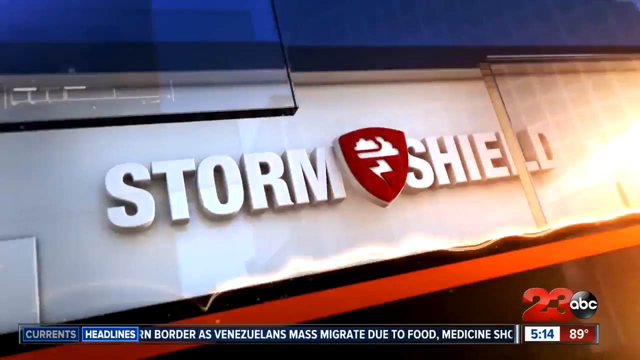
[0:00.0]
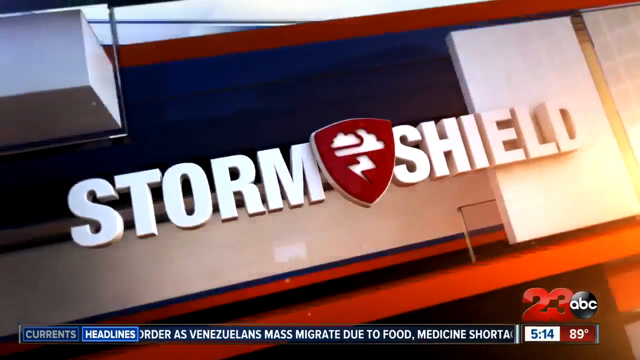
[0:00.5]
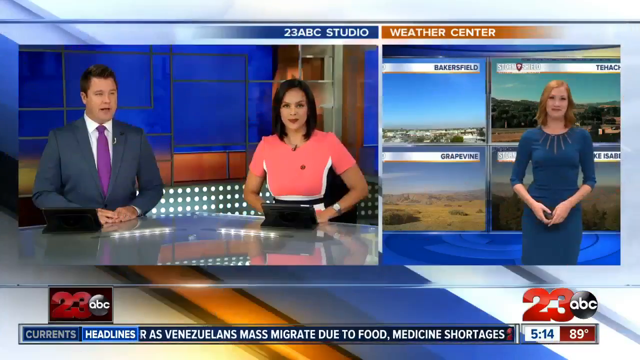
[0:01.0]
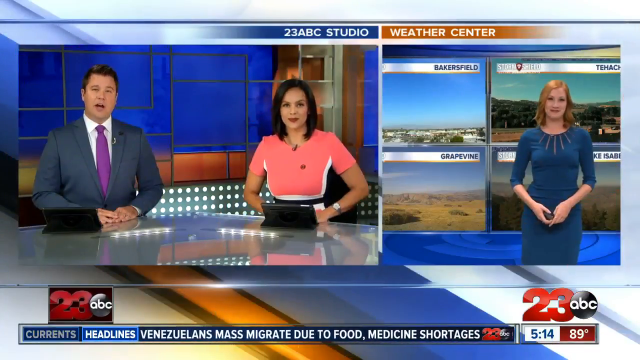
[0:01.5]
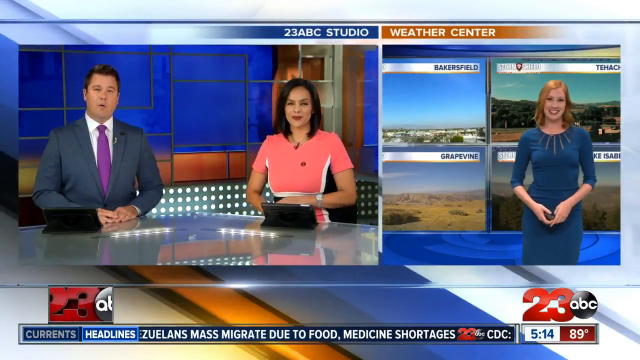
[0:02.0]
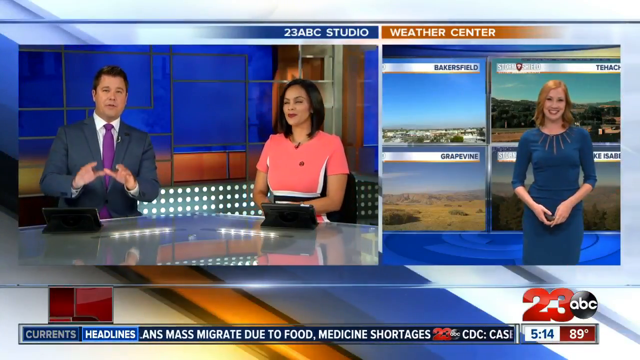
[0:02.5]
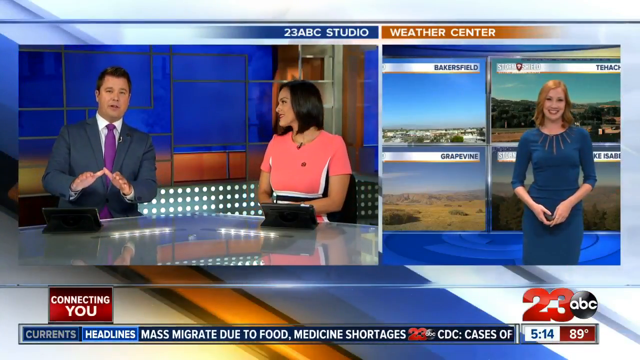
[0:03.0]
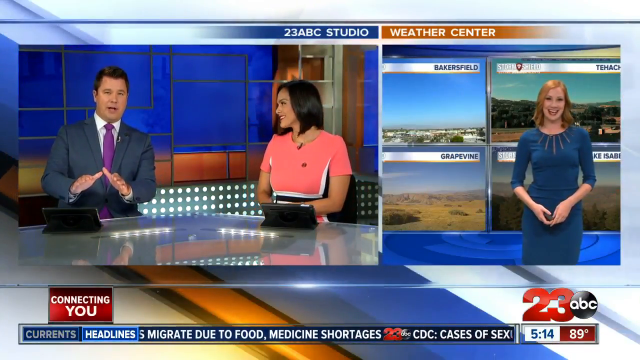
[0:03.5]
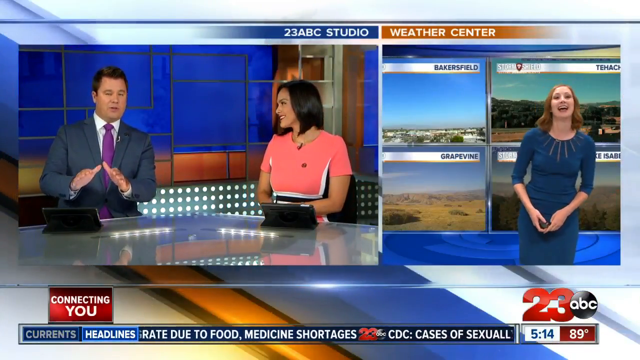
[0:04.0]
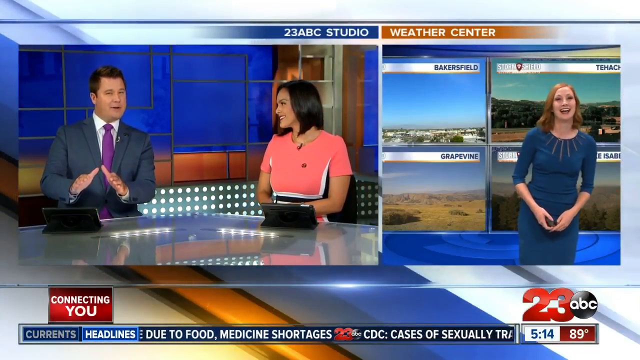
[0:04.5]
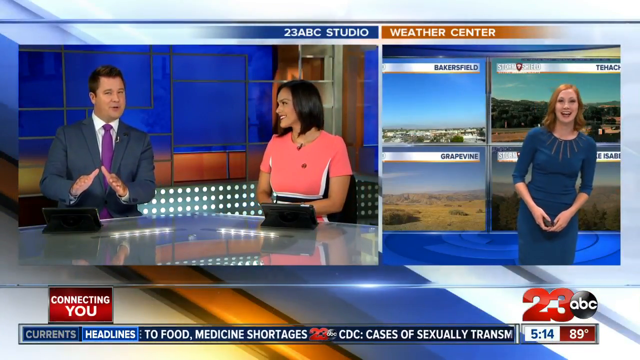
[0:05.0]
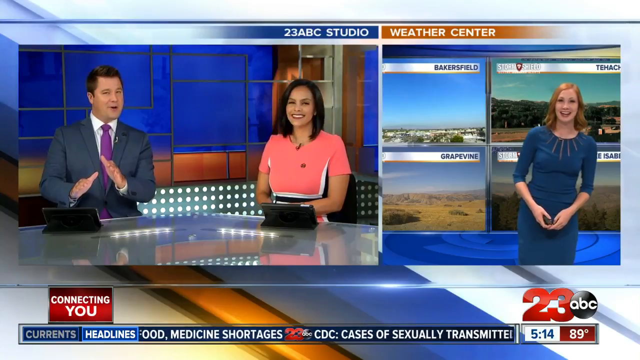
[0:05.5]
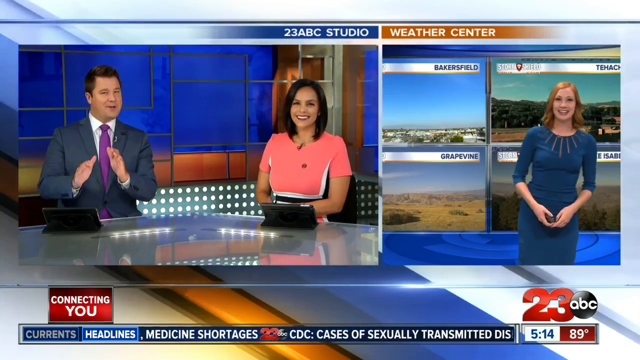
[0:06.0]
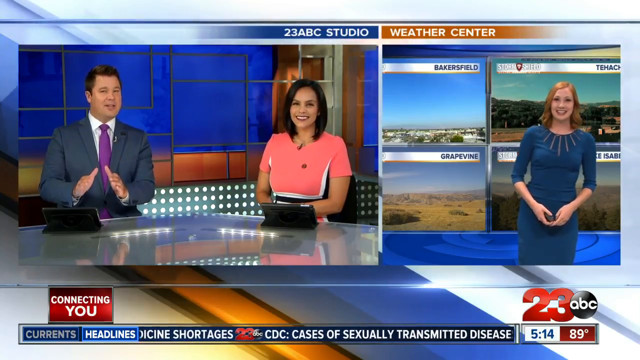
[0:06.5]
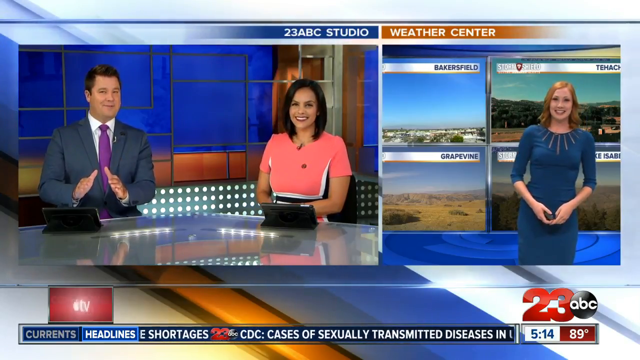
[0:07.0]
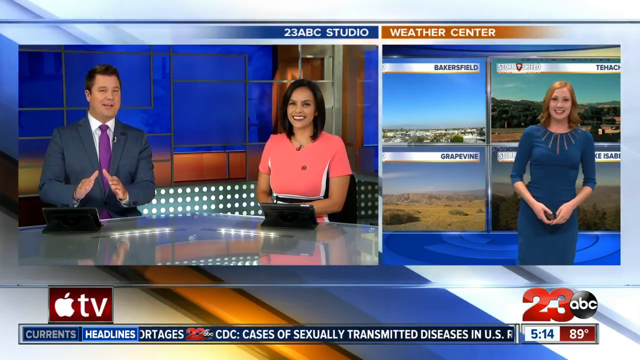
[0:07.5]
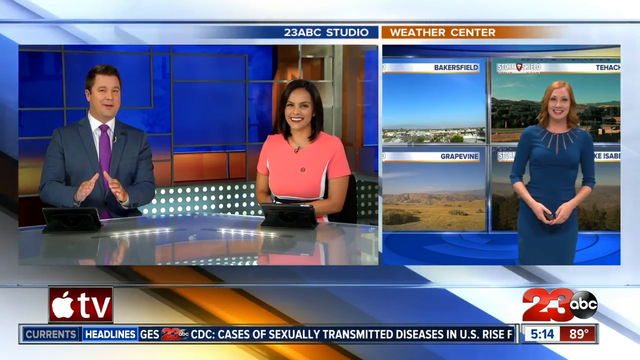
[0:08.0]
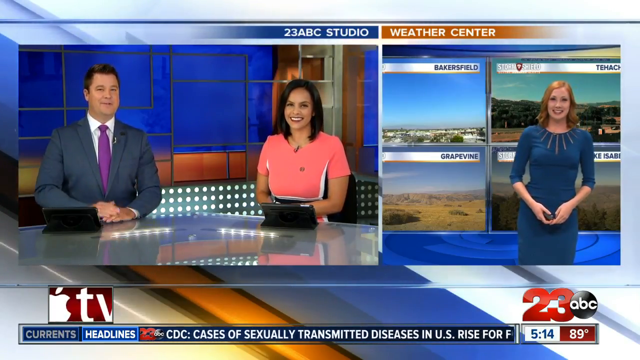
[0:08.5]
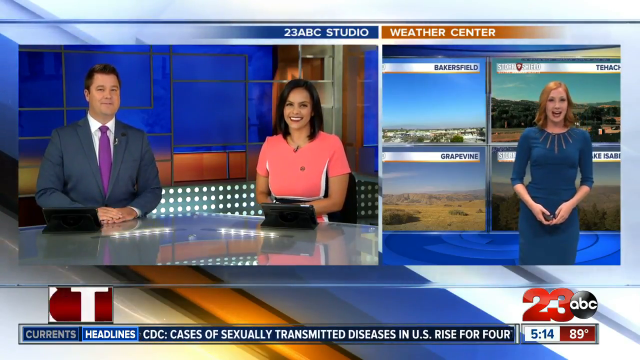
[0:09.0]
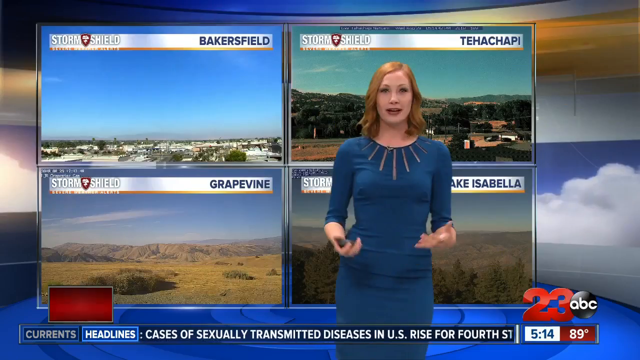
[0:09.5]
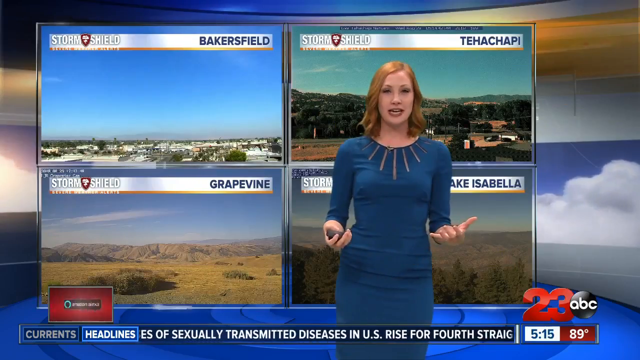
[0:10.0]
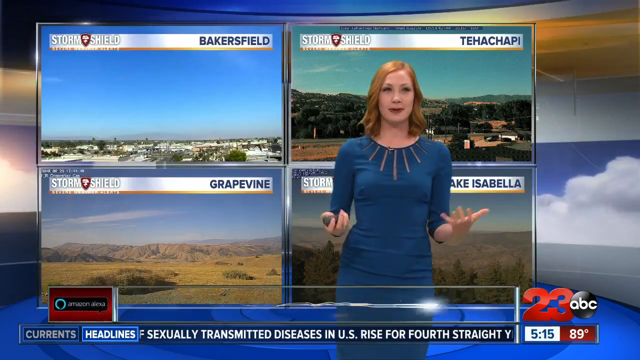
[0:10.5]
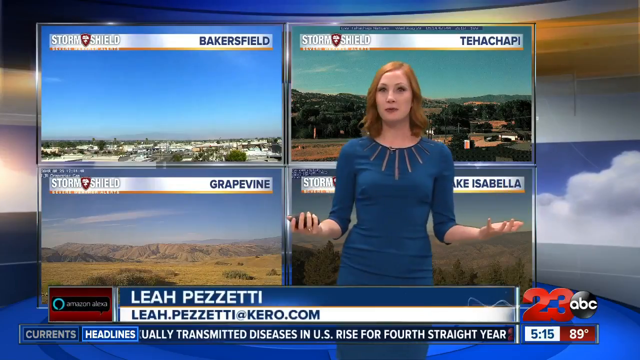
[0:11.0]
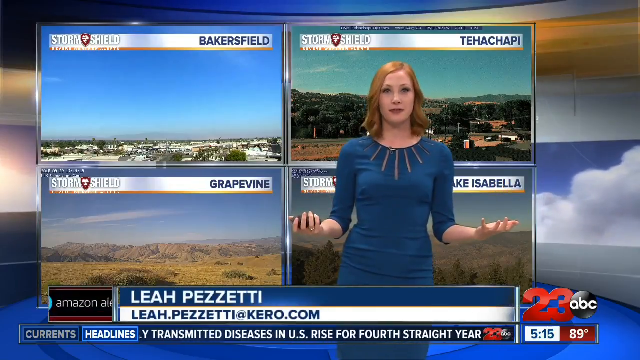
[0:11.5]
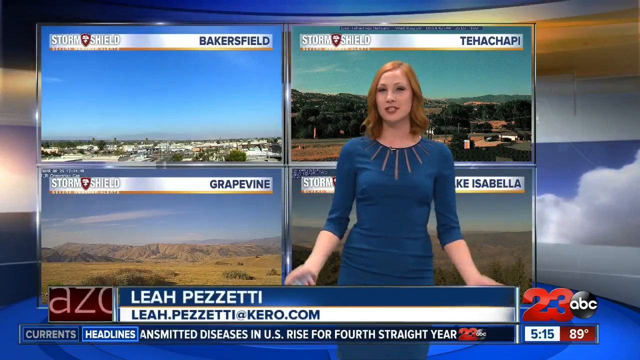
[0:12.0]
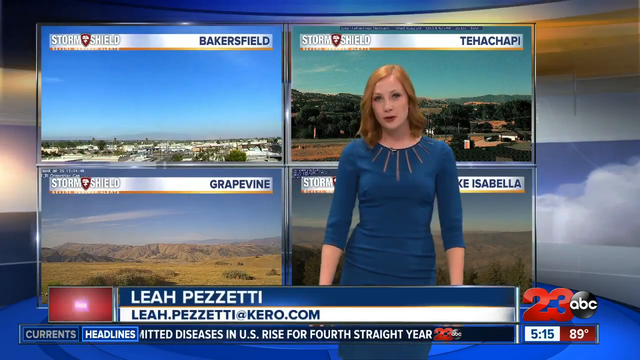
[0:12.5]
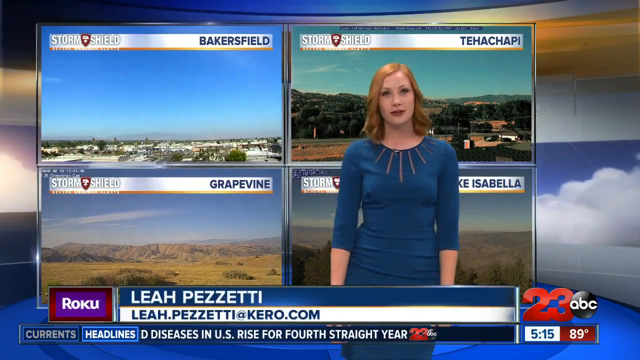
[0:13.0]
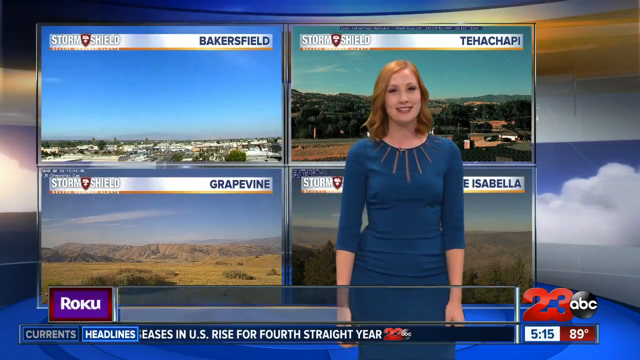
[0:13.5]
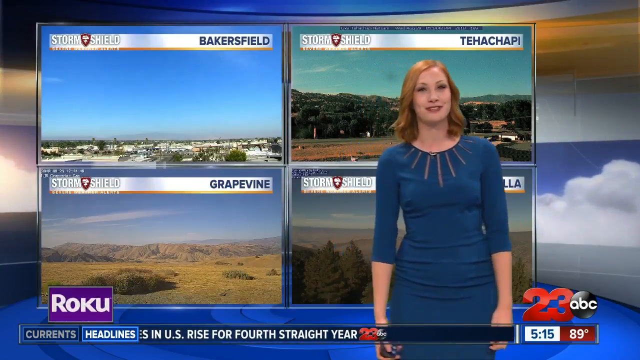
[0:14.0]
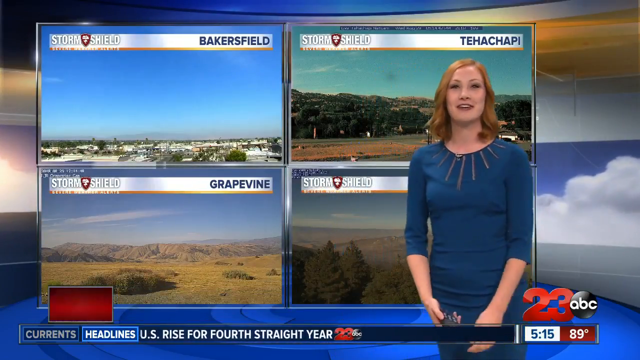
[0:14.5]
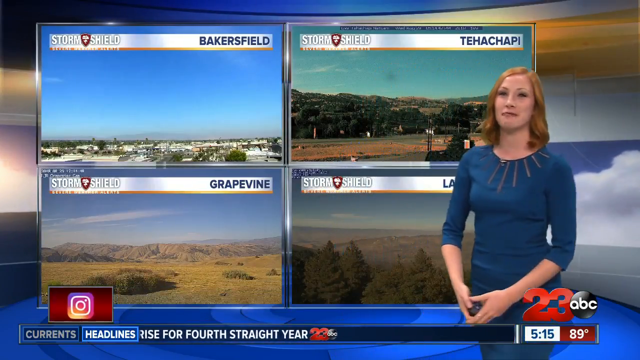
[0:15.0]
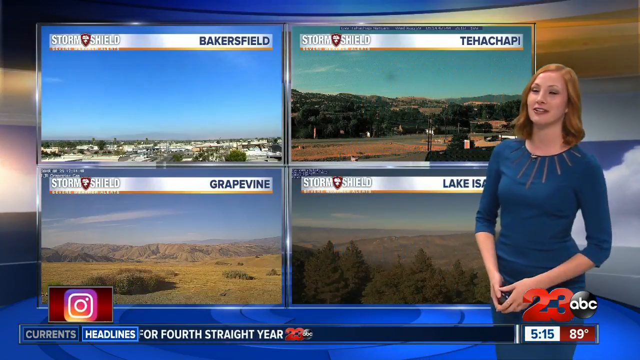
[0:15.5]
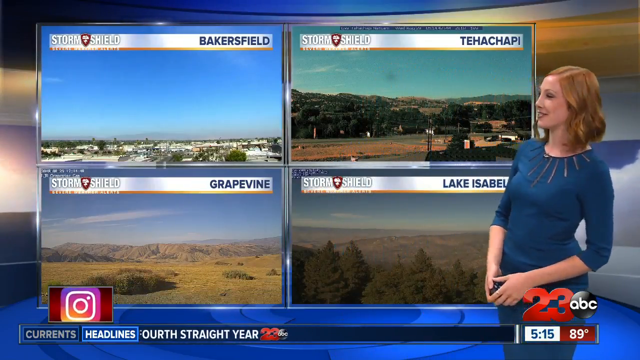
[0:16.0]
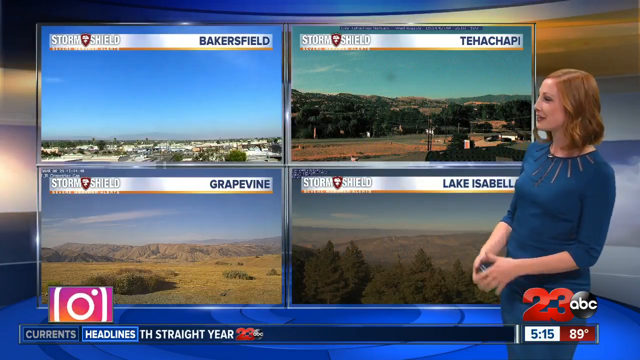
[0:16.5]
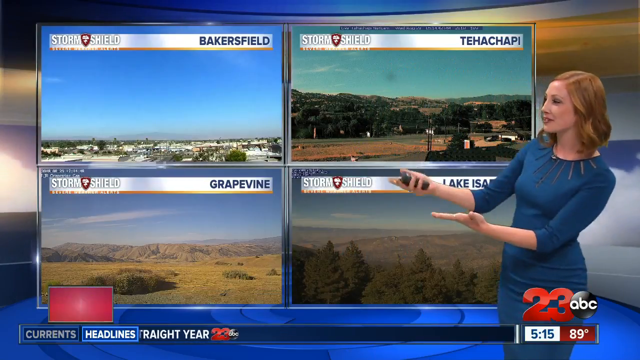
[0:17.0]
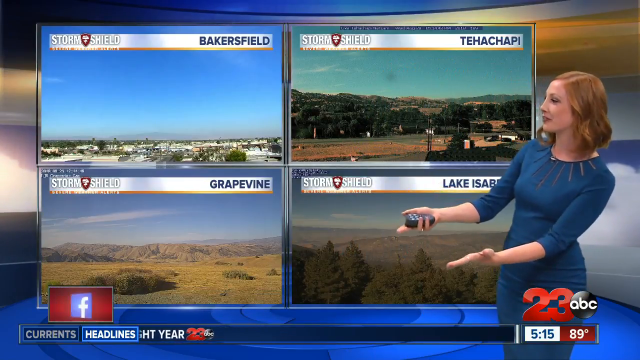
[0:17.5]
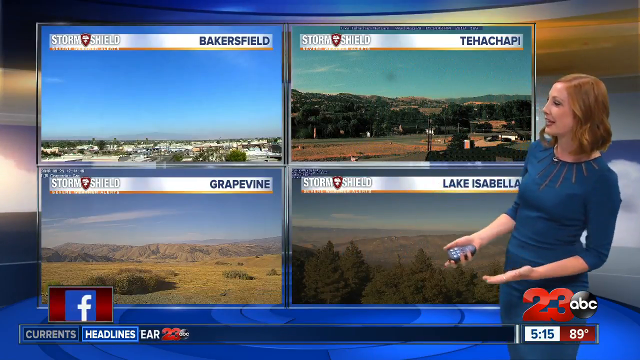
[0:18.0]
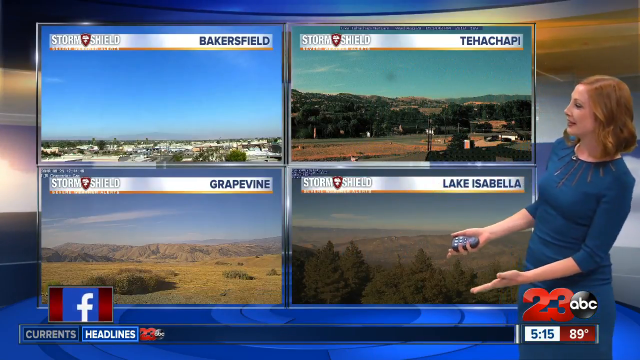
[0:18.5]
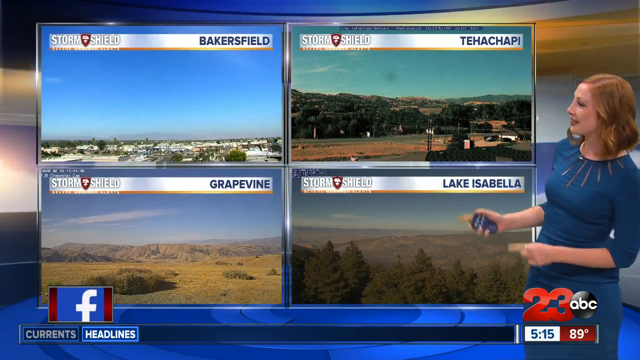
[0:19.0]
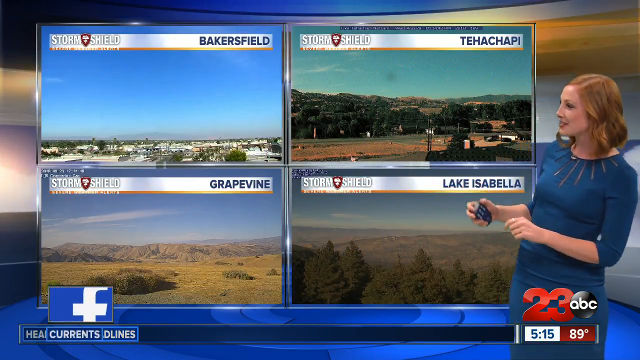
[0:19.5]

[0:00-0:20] Two presenters, a man and a woman, stand in a studio presenting a weather report. The man wears a blue suit, a purple tie and a white shirt; the woman wears a pink dress with black and white, has a watch on her left, and has long black hair. Another female presenter is displayed presenting the weather in a different location with a different background. She wears a blue dress and has long blonde hair, and she stands in front of a big screen displaying text including "Storm Shield", "Grapevine", "Stonefield" and "Lake Isabella", along with other names. The presenter's name is Leah Pezzetti. She begins to report, pointing at the screen display as she moves to the side of the screen, holding a remote in her right hand as she continues reporting on the weather shown on the big screen.